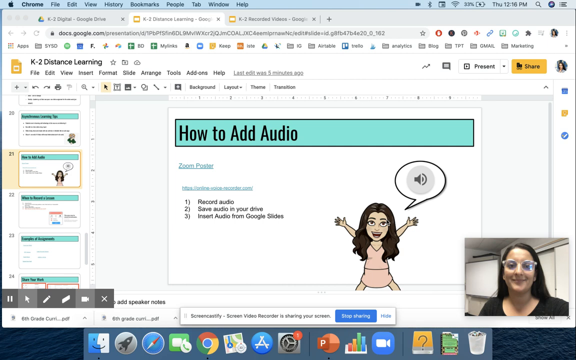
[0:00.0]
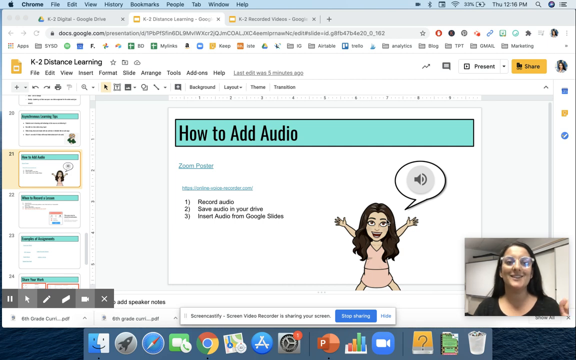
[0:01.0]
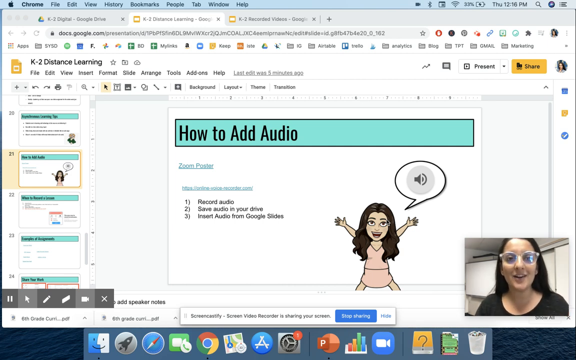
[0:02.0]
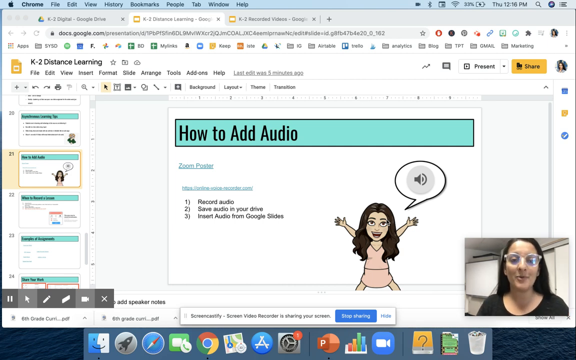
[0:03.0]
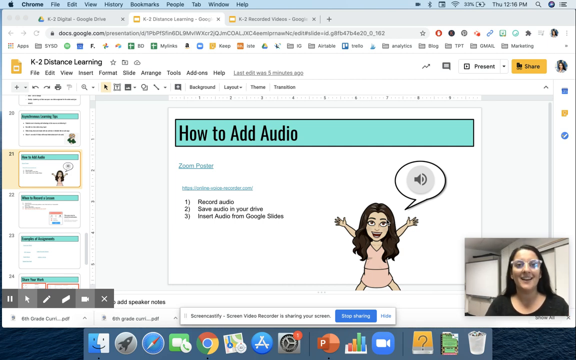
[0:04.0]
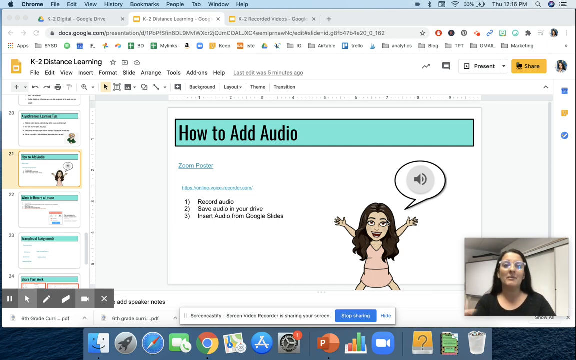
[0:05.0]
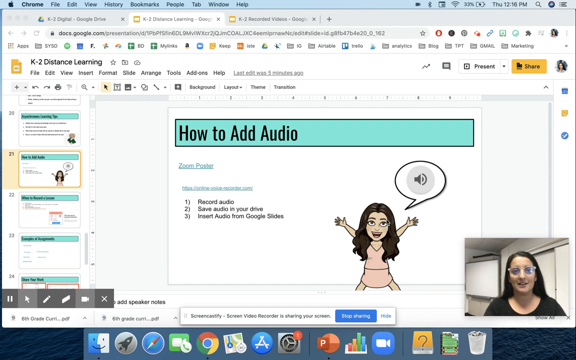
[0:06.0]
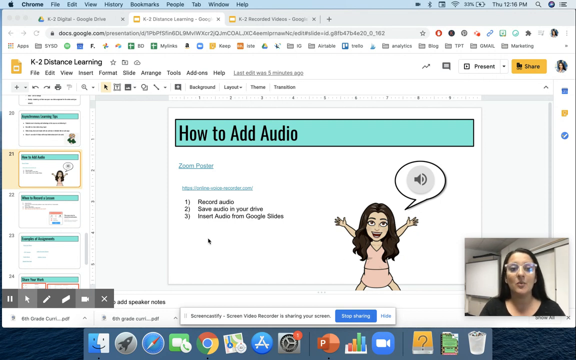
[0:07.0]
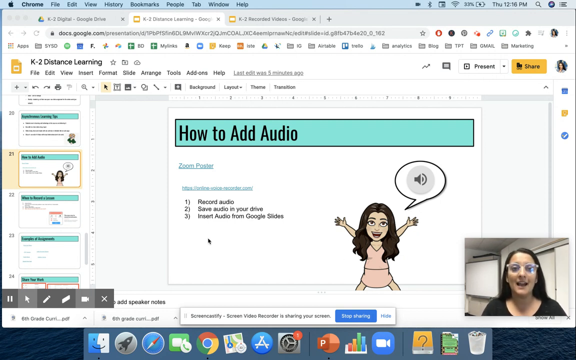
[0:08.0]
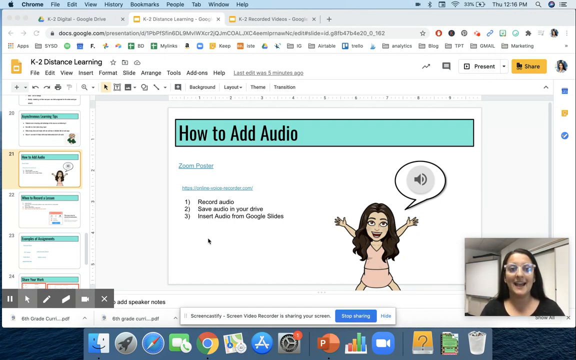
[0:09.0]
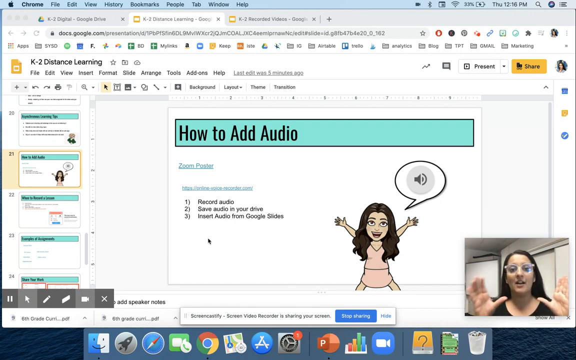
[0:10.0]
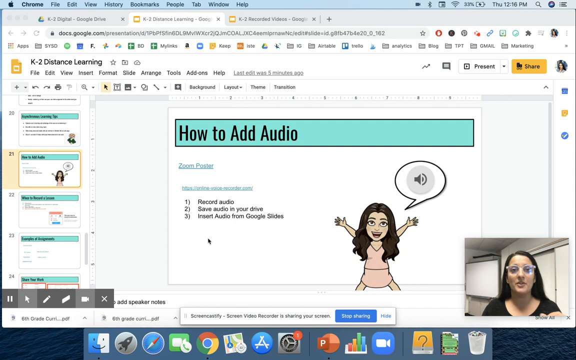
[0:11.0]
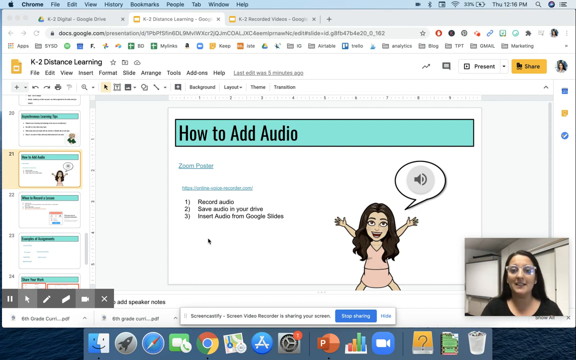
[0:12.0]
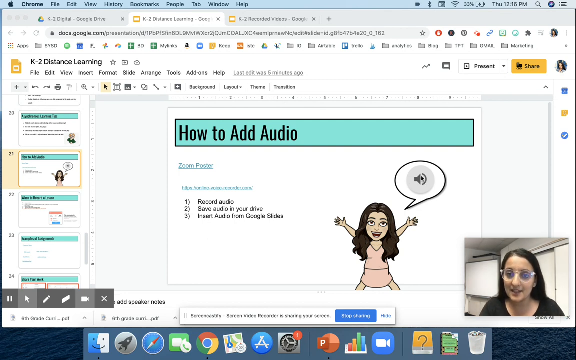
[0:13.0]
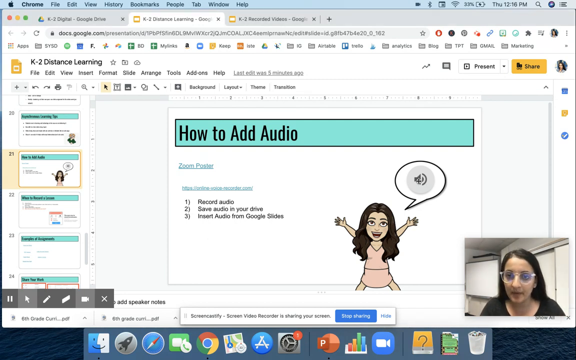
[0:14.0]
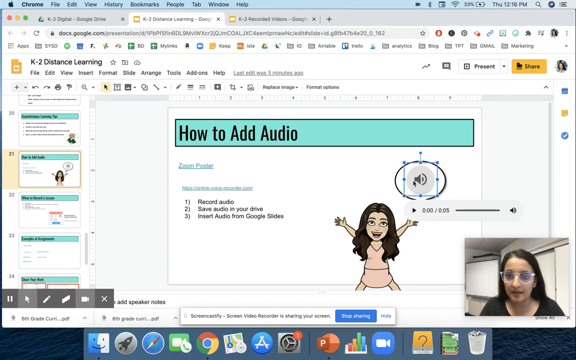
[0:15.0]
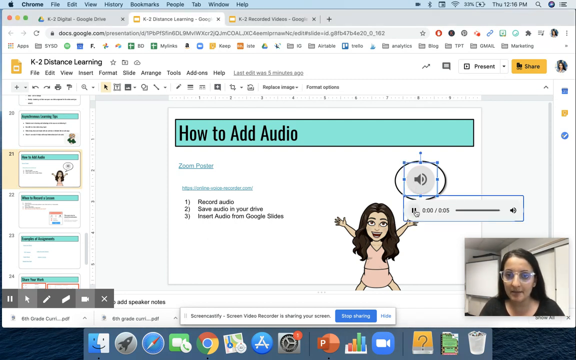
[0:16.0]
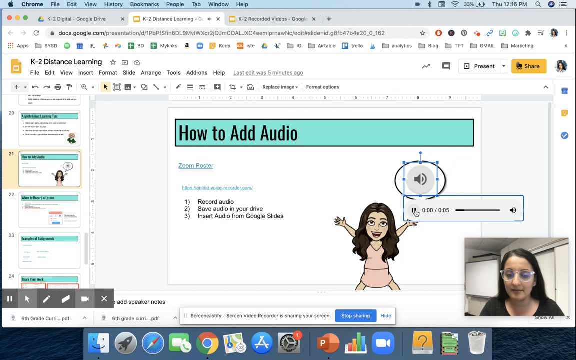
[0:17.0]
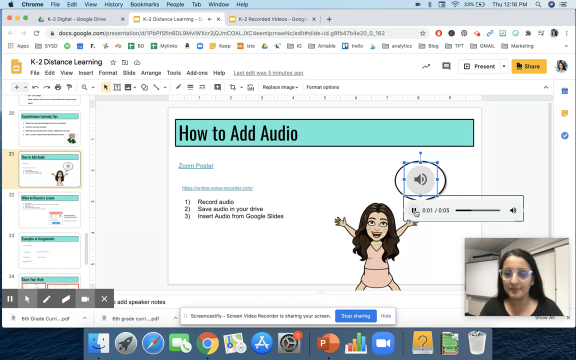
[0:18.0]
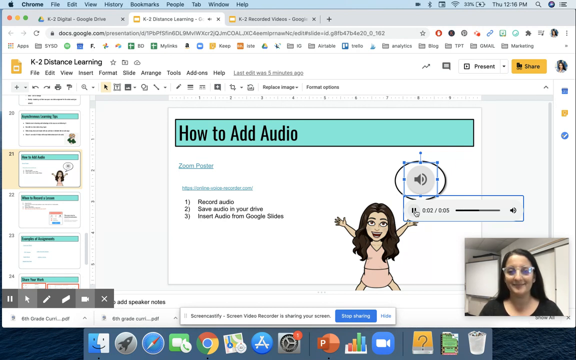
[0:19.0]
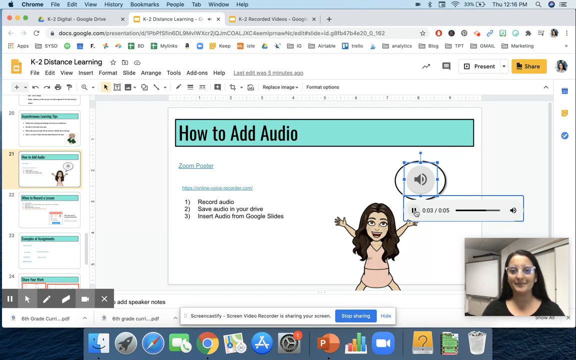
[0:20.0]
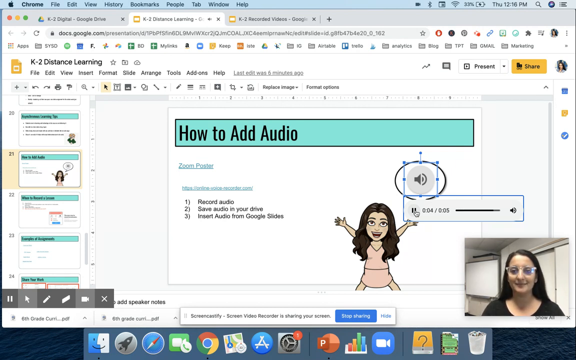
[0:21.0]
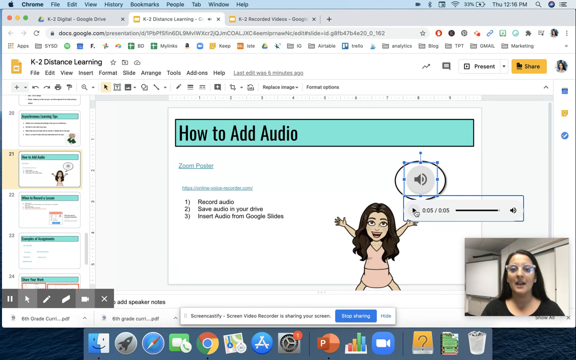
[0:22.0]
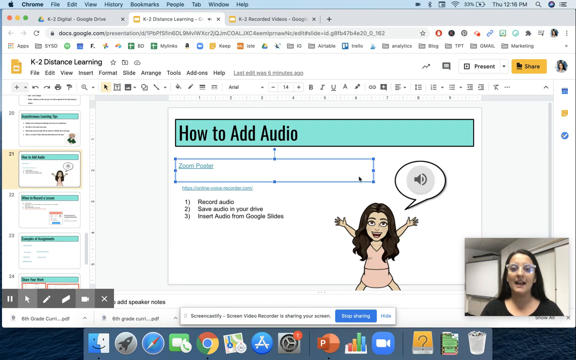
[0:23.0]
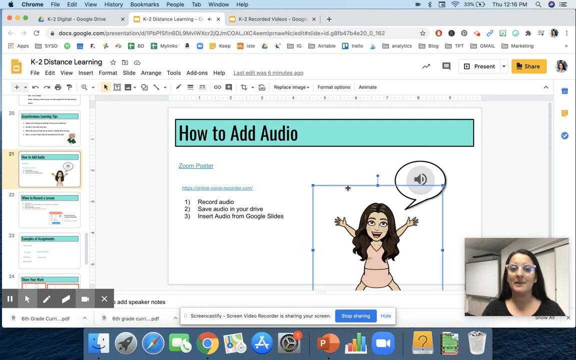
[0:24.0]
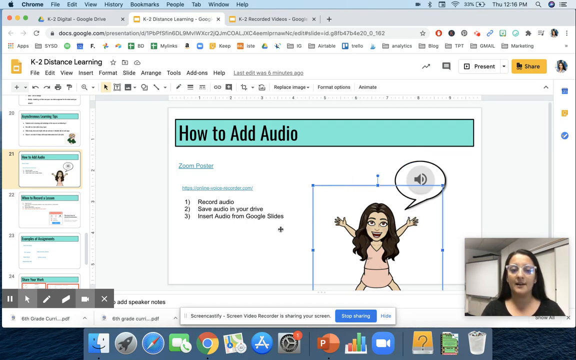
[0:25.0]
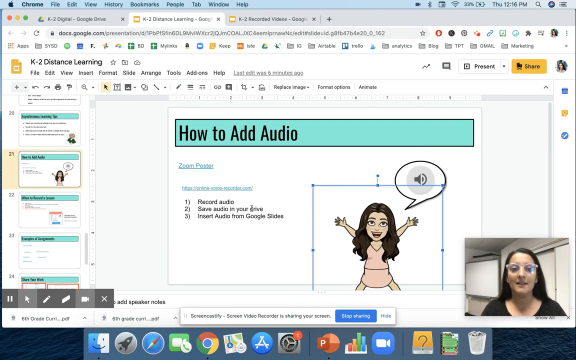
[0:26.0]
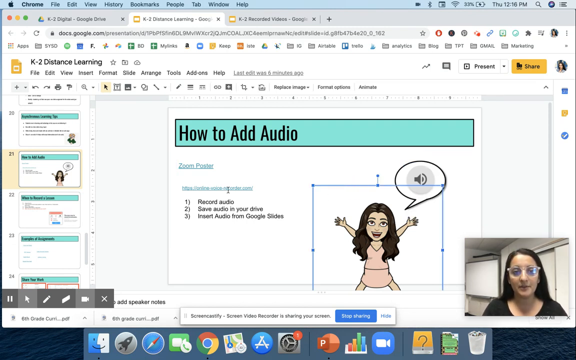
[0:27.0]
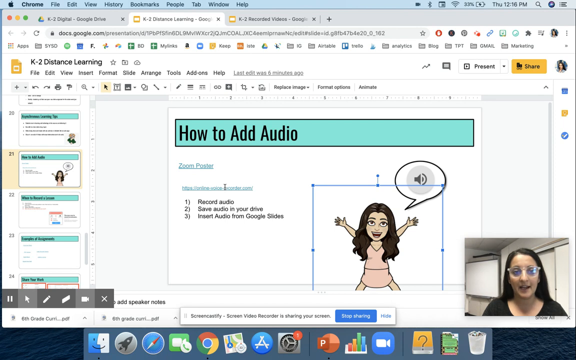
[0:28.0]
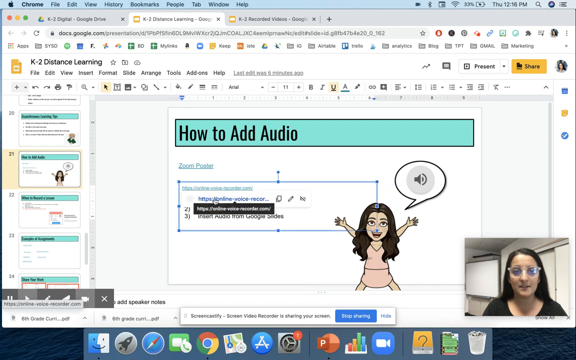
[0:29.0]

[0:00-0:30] The video begins with a screen recording of a Google PowerPoint about how to add audio, with a woman live streaming or Skyping in and talking about the subject matter shown in the presentation. The woman teaching this topic appears in the bottom right; she is probably in her 20s, with long dark hair and clear glasses. For most of the shot she talks over the initial page about how to add audio, which lists three steps: first, "record audio"; second, "save audio in your drive"; and third, "insert audio from Google Slides." The mouse moves around the screen a little, apparently navigated by the teacher, and it ends up clicking on the second instruction, "save audio in your drive," which opens an external link that pops up.